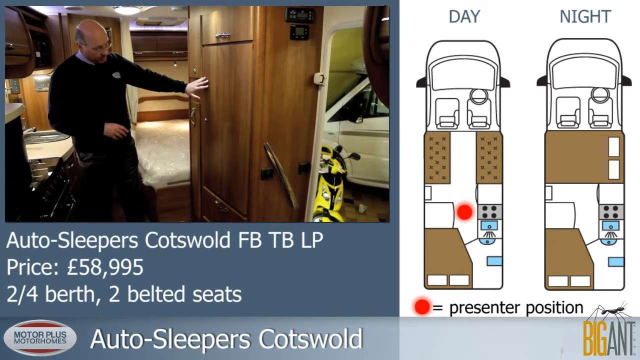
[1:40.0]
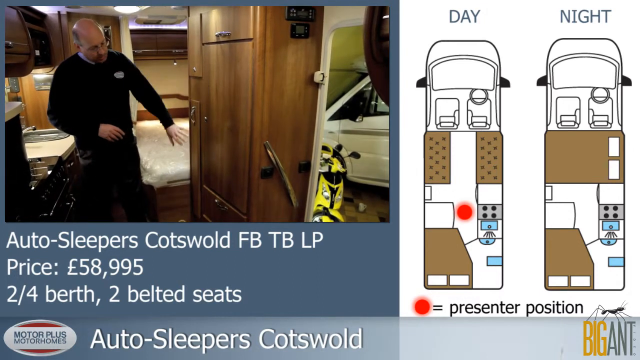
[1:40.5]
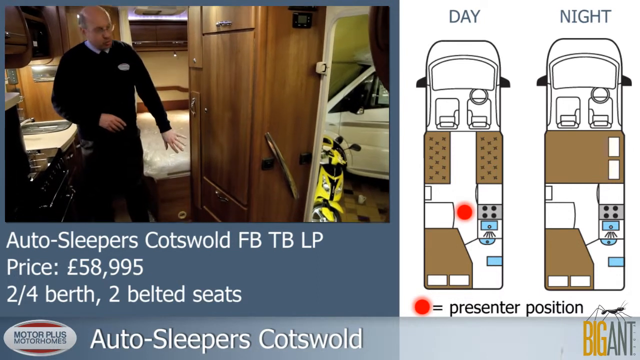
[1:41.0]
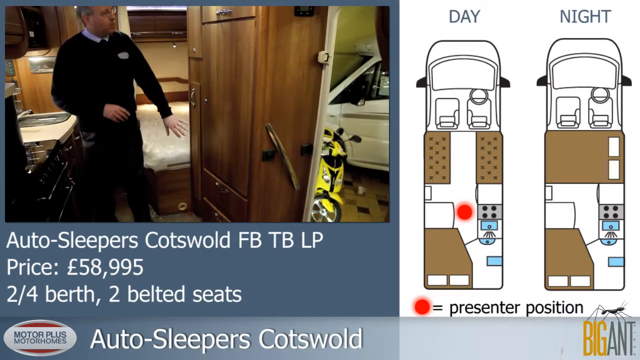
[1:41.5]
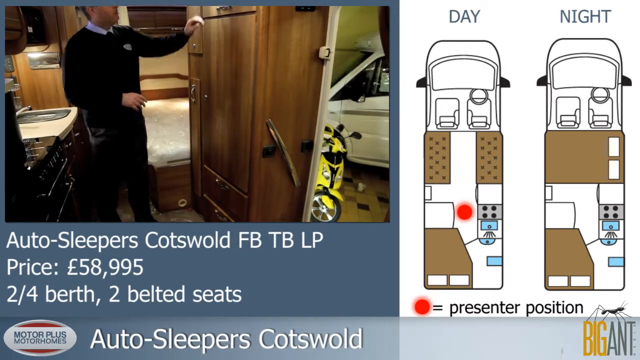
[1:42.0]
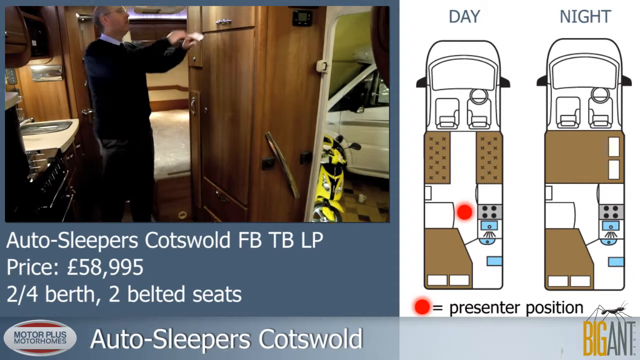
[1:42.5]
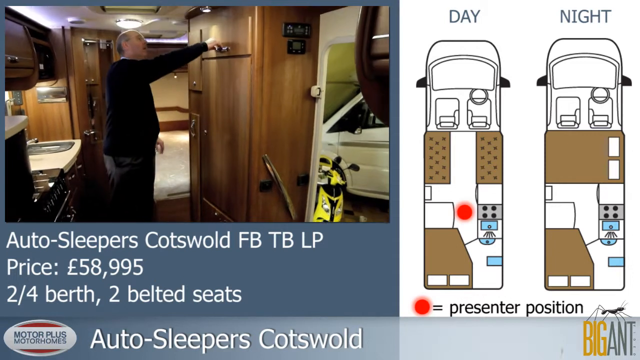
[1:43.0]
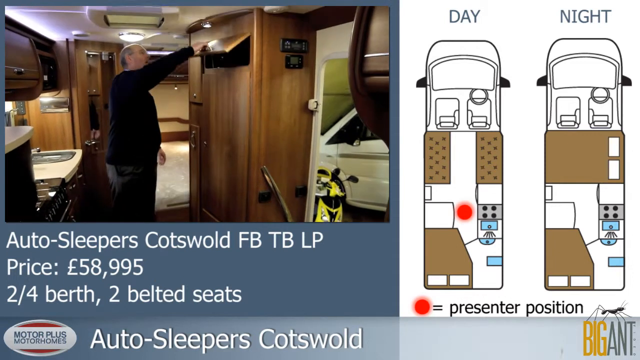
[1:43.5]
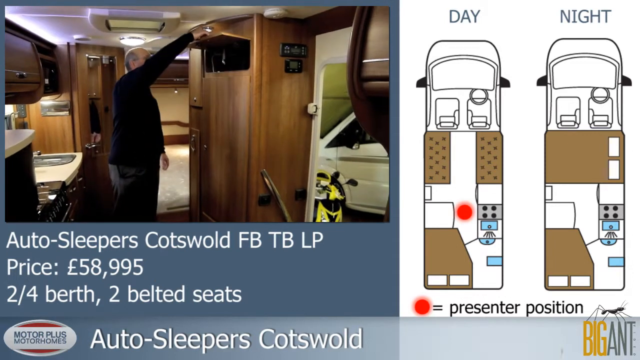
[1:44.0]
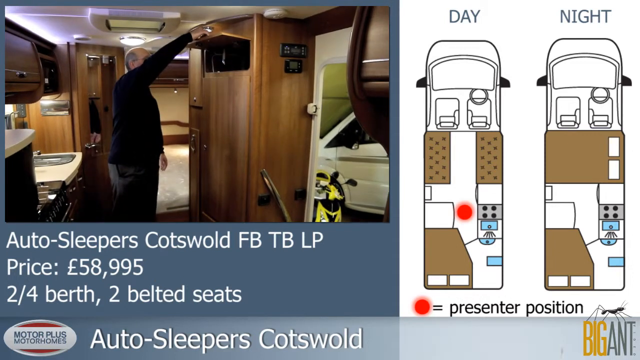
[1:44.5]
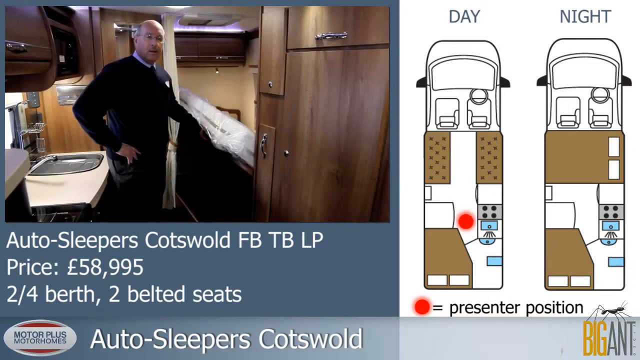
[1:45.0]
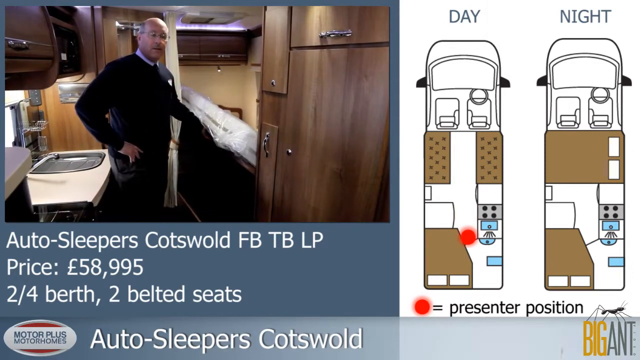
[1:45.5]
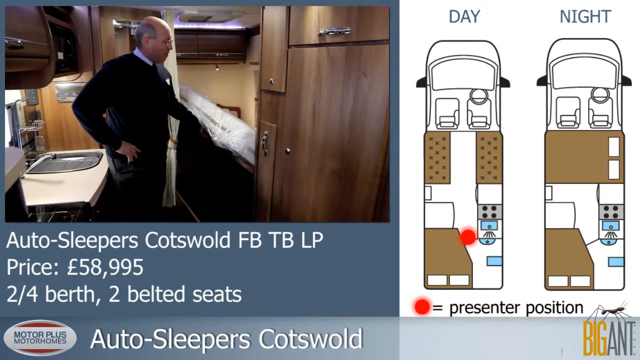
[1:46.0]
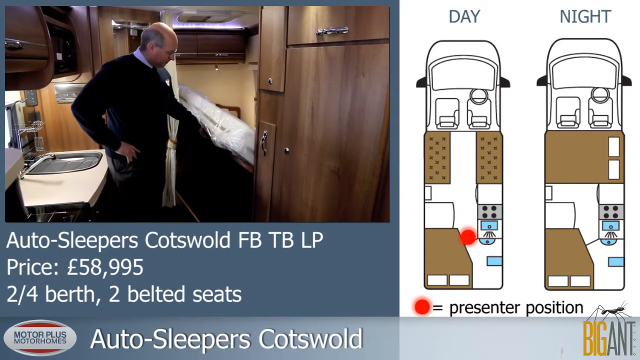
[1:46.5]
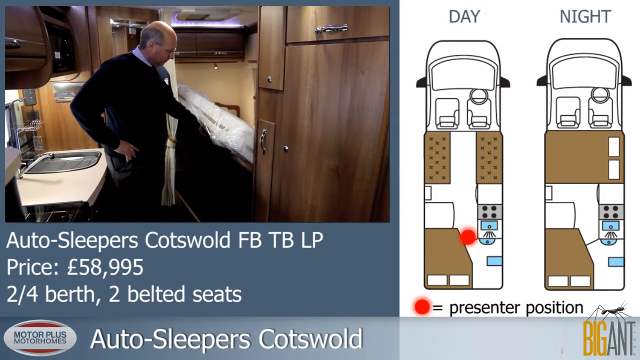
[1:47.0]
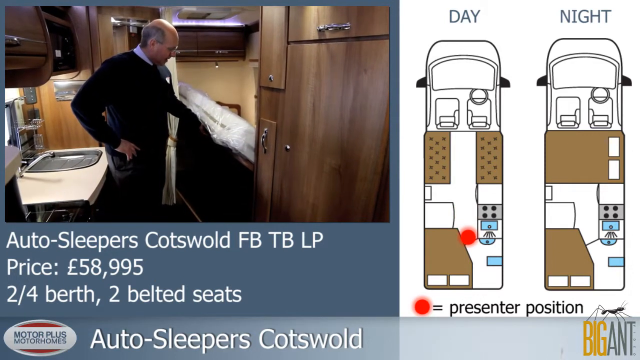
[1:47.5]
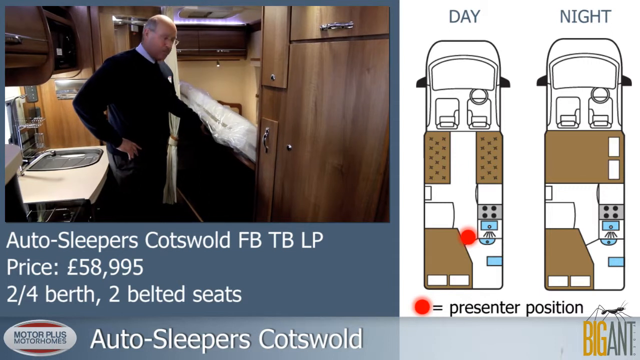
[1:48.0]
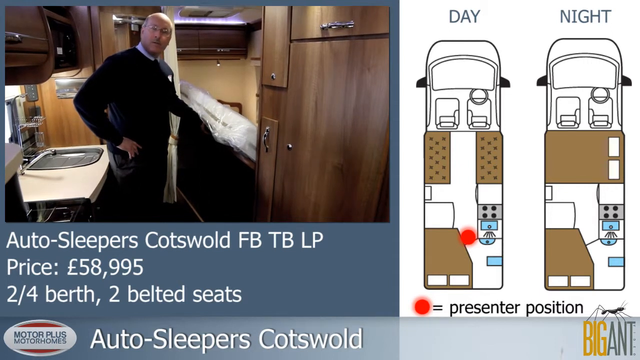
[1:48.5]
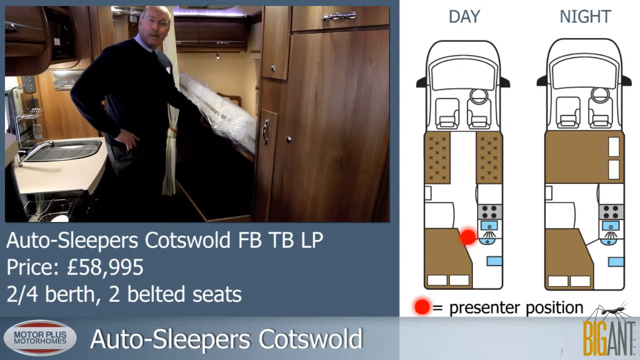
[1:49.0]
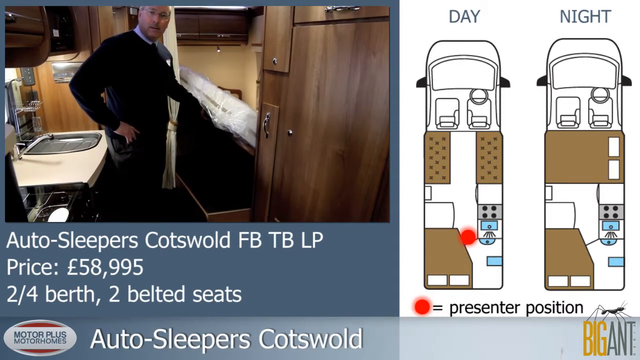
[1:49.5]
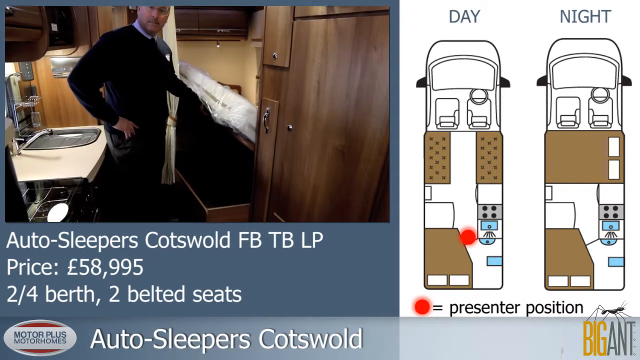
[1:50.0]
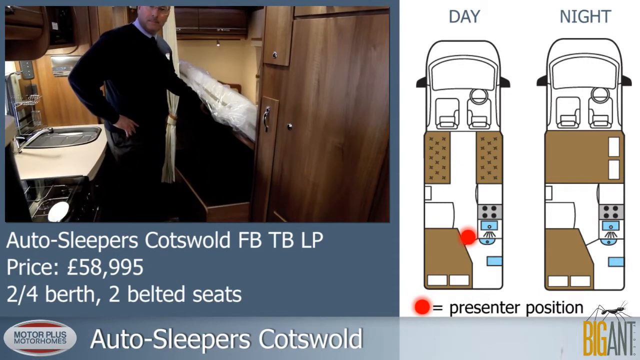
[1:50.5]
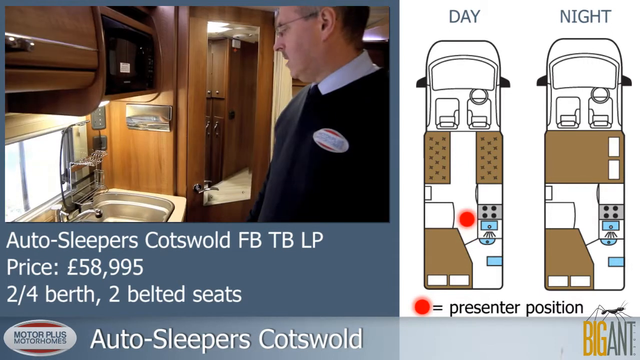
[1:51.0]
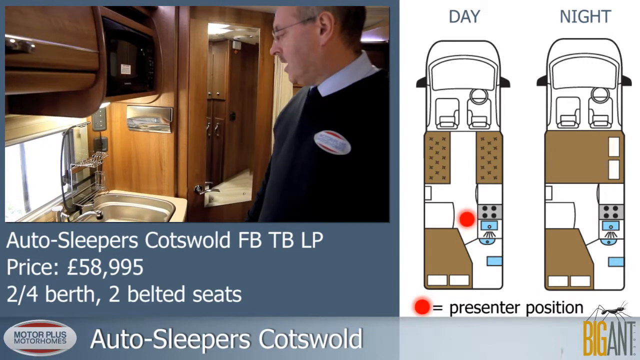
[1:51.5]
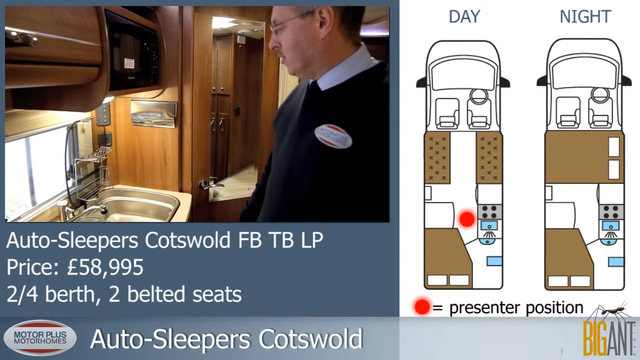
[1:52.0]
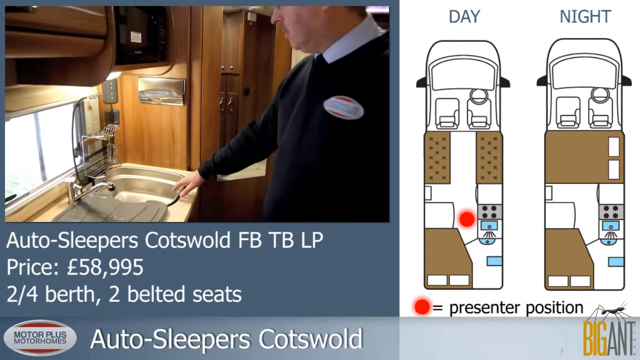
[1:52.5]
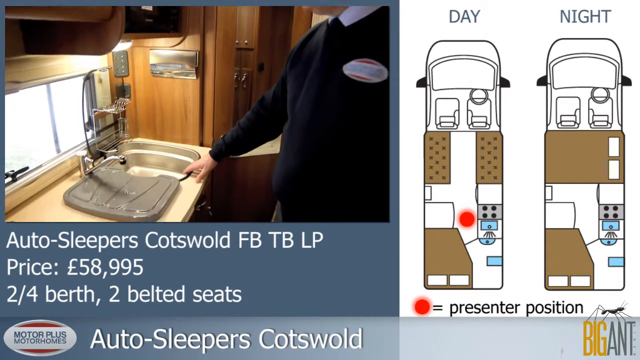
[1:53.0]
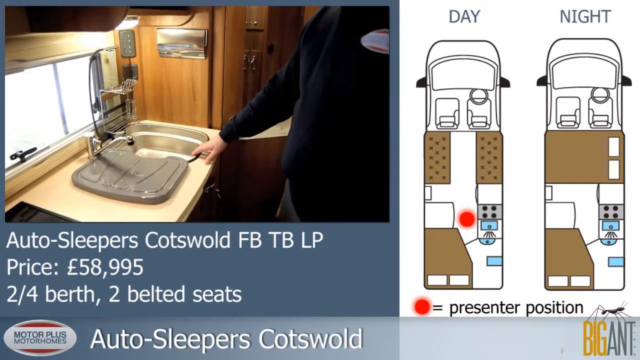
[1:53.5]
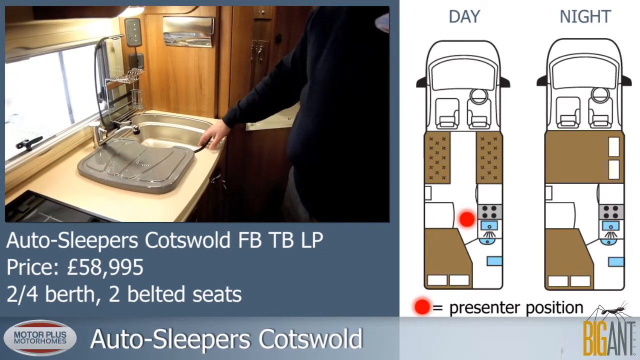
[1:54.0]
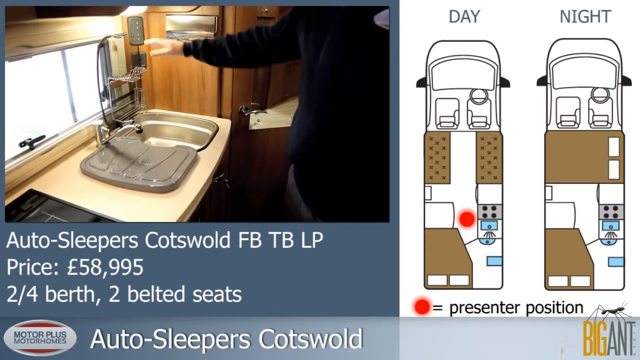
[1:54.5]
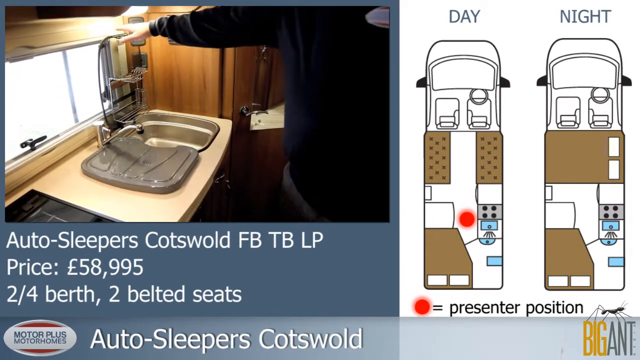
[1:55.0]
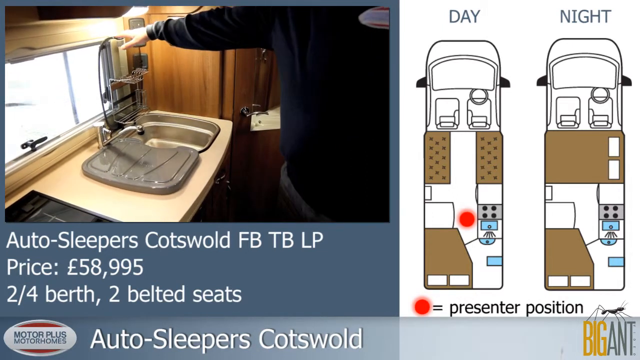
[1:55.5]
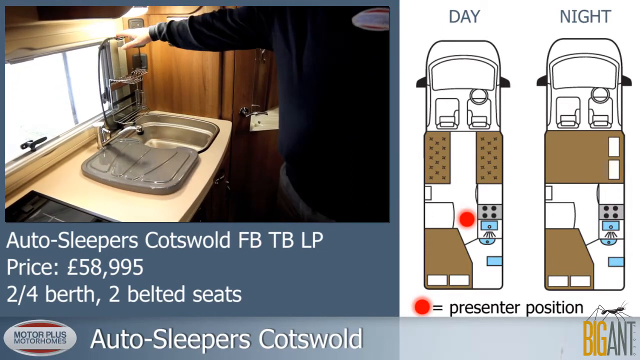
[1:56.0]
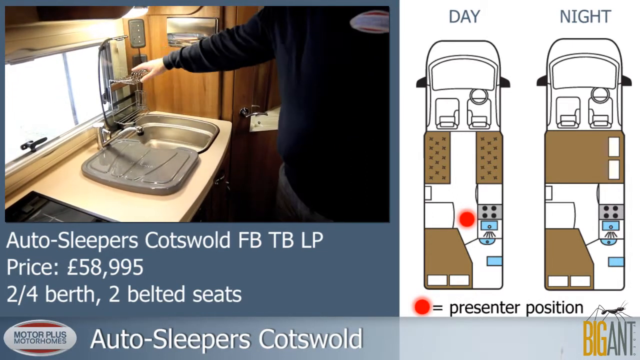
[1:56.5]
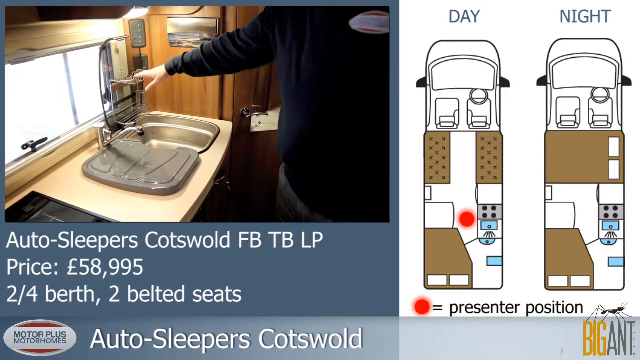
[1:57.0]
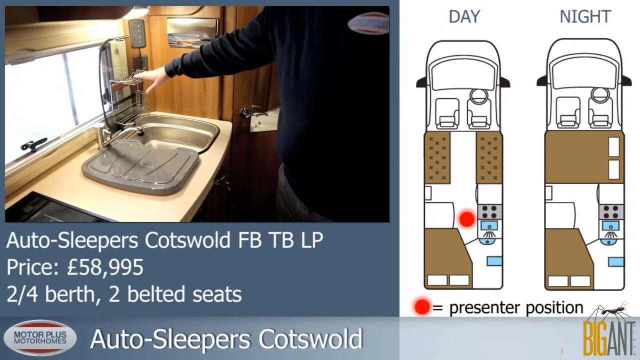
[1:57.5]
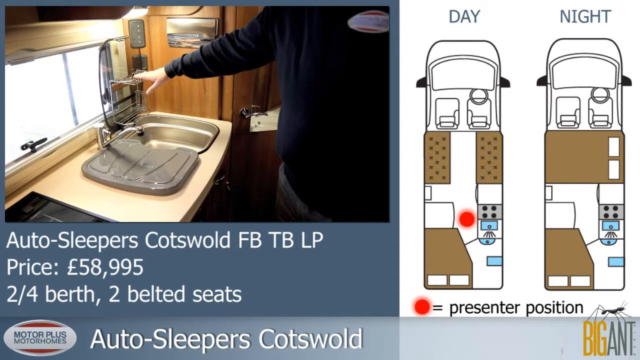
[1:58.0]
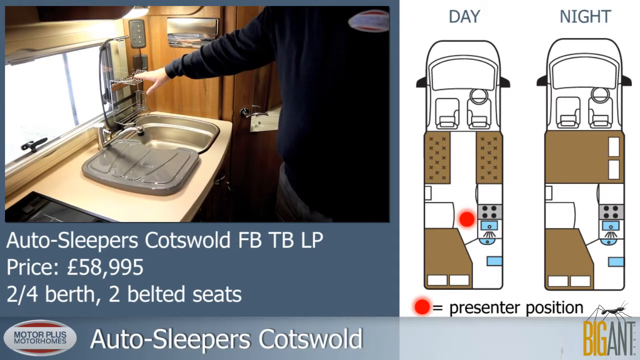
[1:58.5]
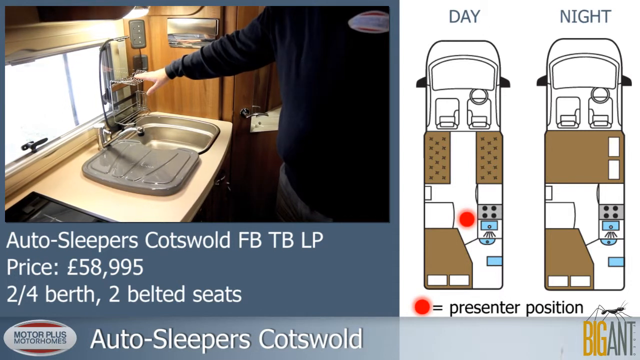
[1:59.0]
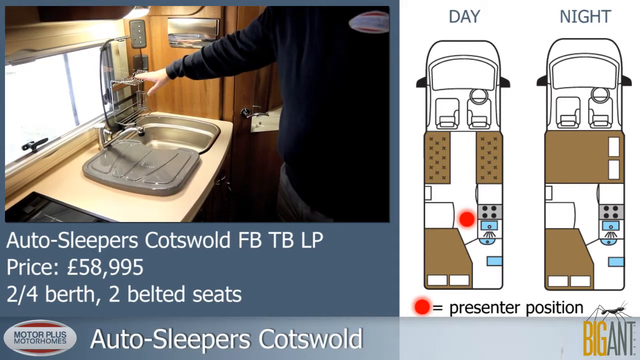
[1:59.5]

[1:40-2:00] The salesman shows more overhead storage and then moves to the main bed at the back of the vehicle, next to the kitchenette. He lifts the entire mattress, which is contained in plastic wrapping, revealing plenty of storage in a compartment underneath the bed. He then shows the kitchenette sink, which has a tap, a cover and a draining board, plus a place for washing-up liquid. There are plenty of power sockets.